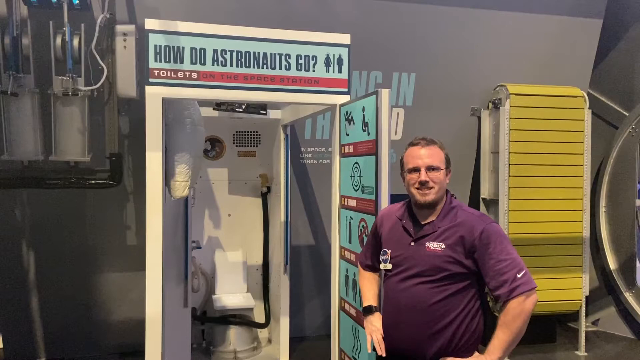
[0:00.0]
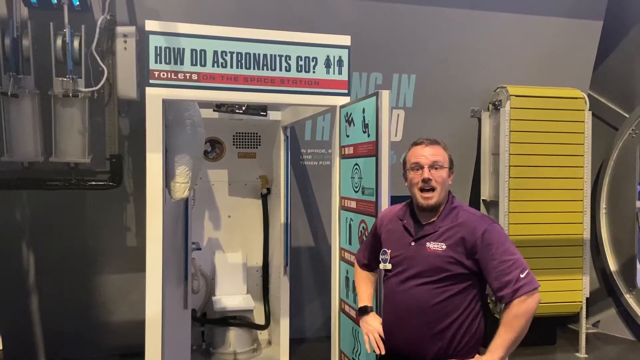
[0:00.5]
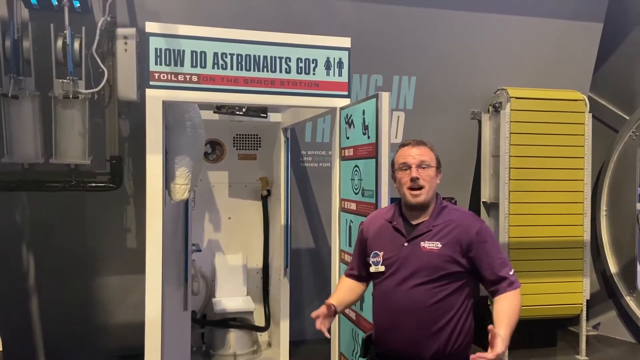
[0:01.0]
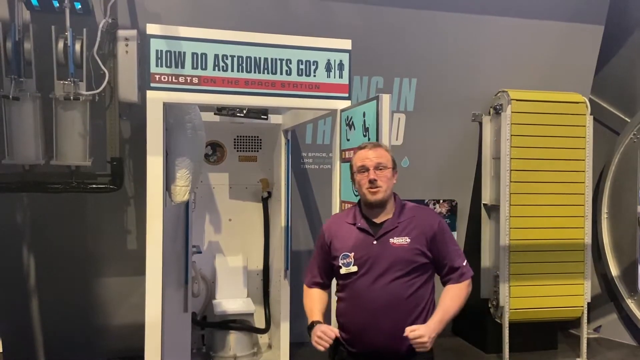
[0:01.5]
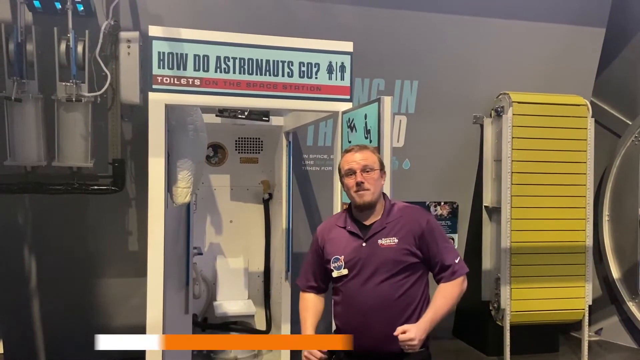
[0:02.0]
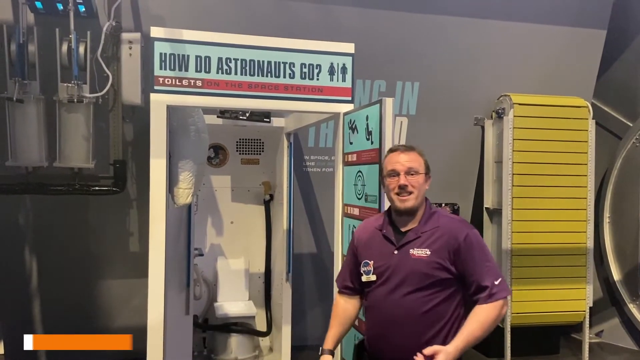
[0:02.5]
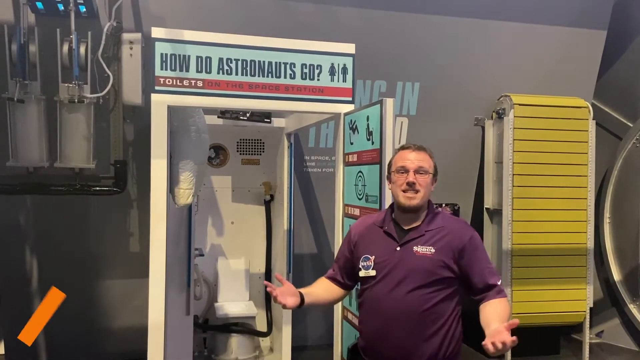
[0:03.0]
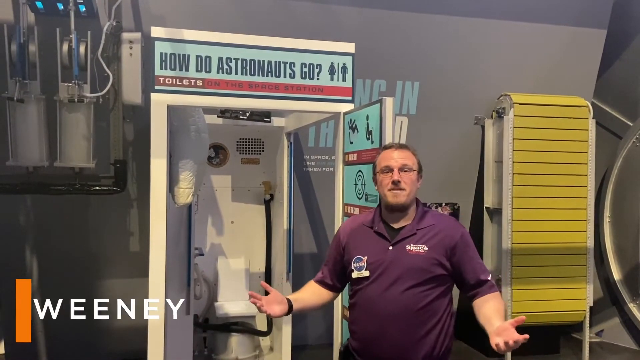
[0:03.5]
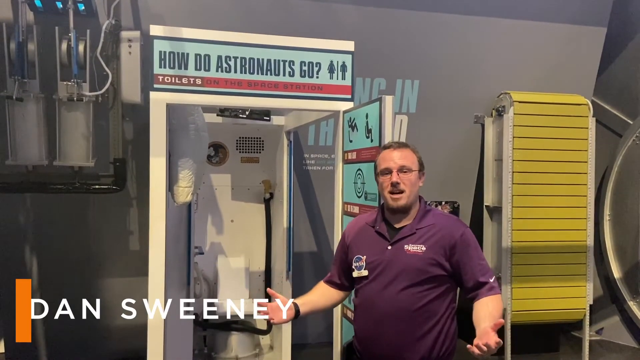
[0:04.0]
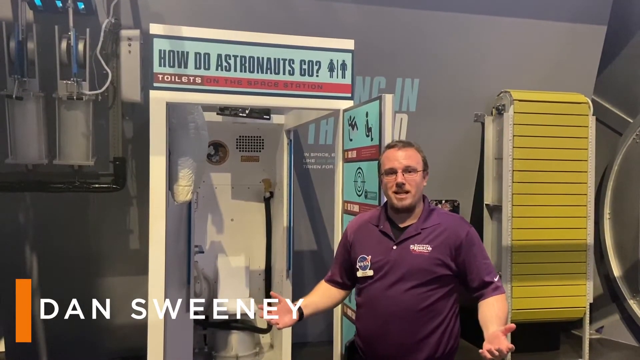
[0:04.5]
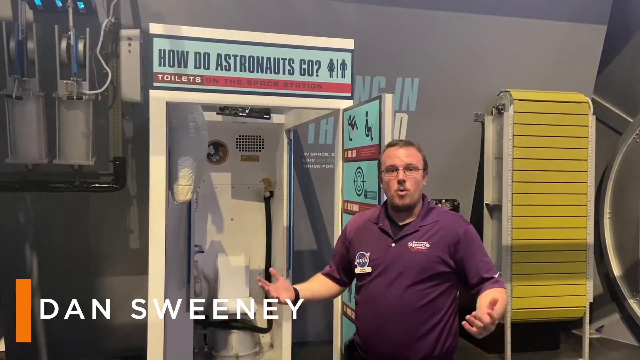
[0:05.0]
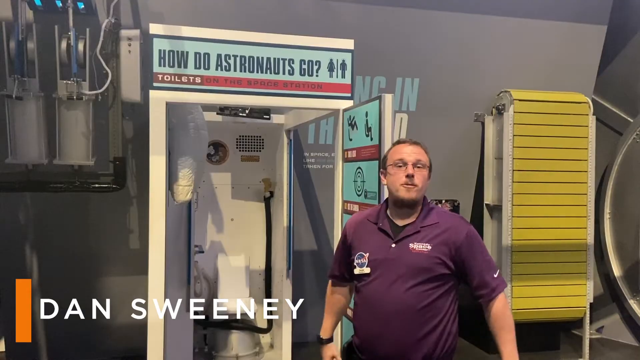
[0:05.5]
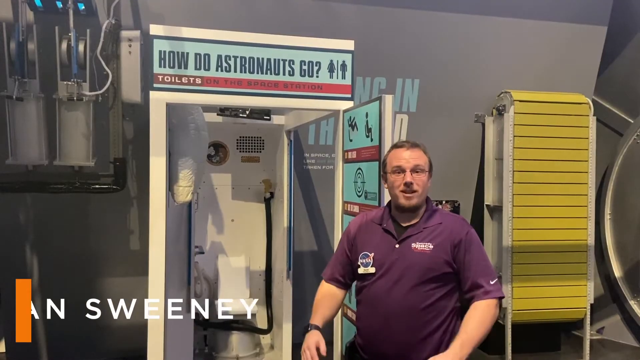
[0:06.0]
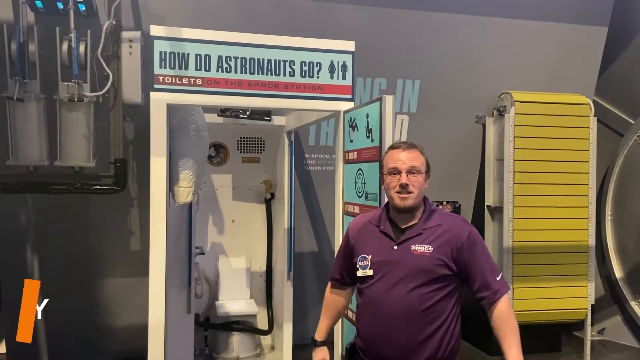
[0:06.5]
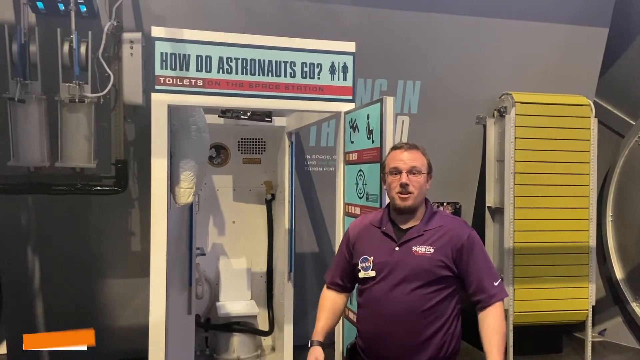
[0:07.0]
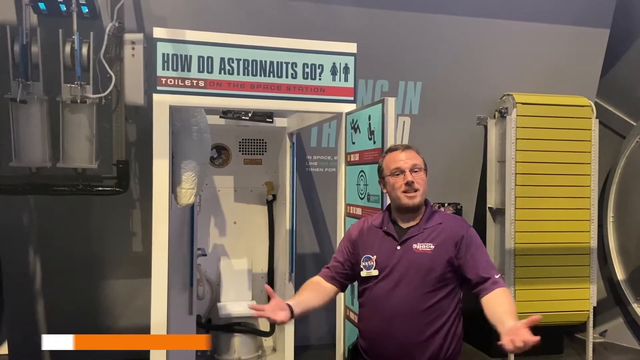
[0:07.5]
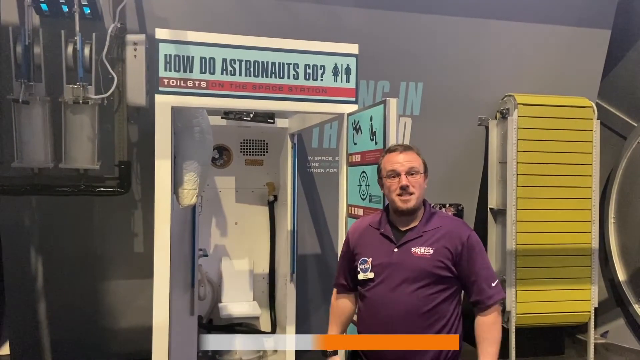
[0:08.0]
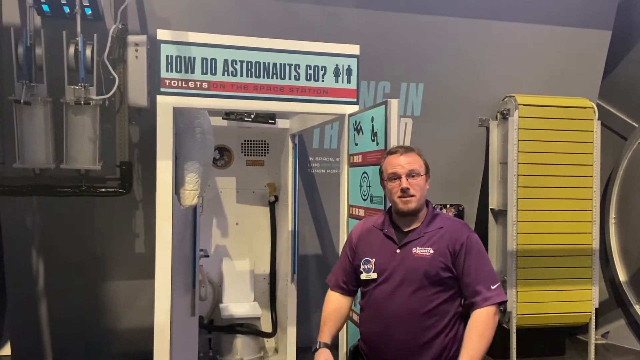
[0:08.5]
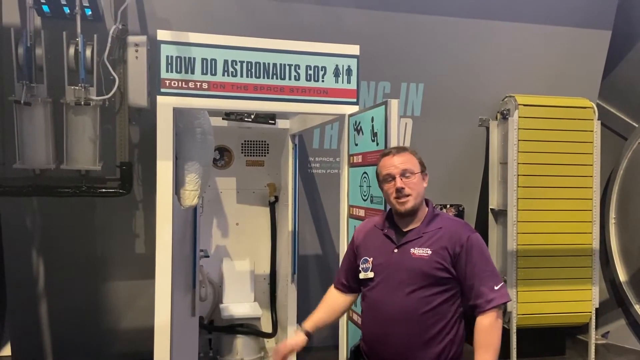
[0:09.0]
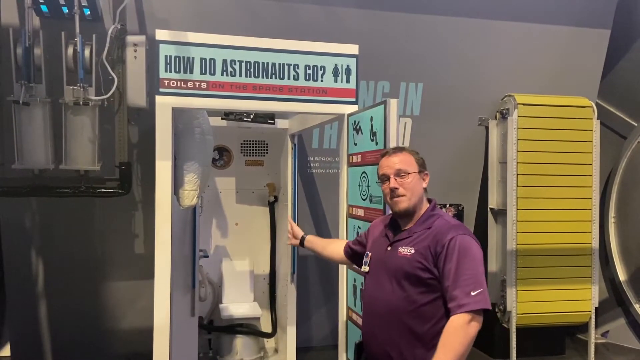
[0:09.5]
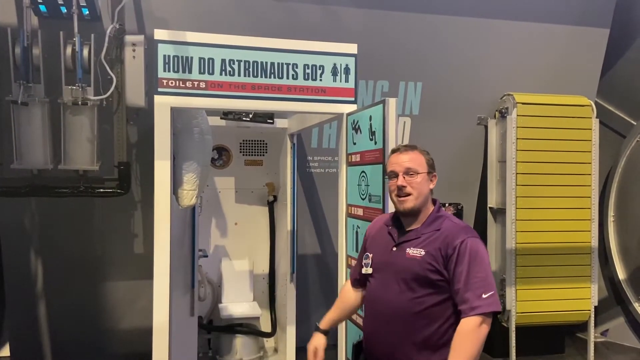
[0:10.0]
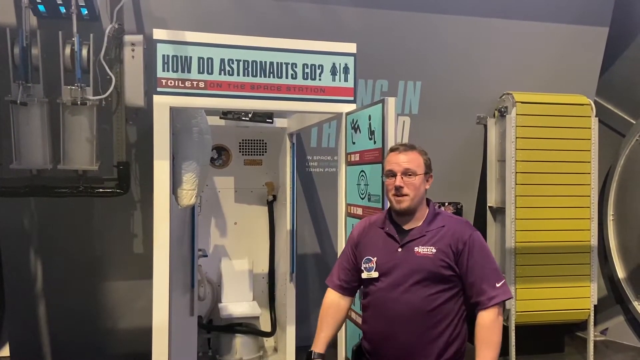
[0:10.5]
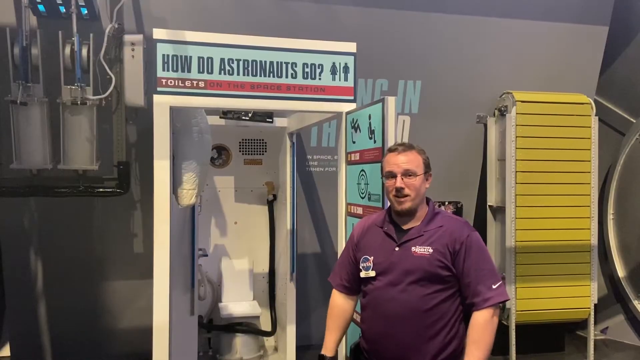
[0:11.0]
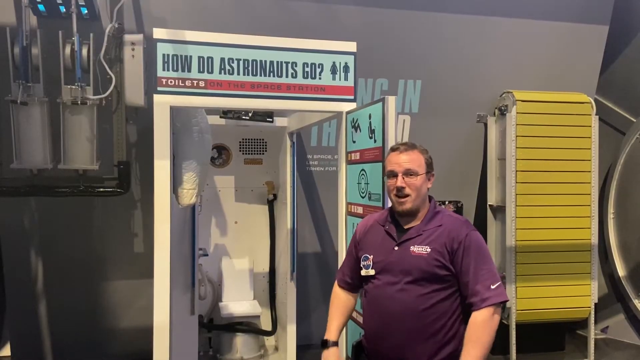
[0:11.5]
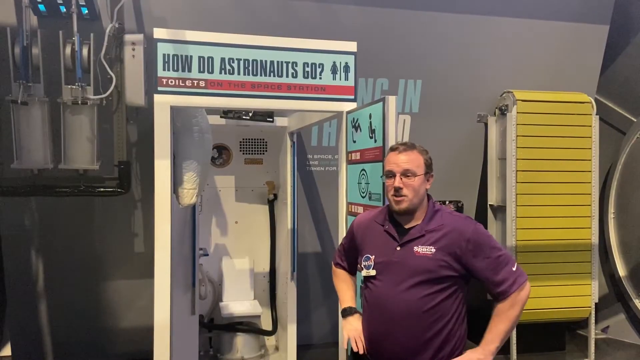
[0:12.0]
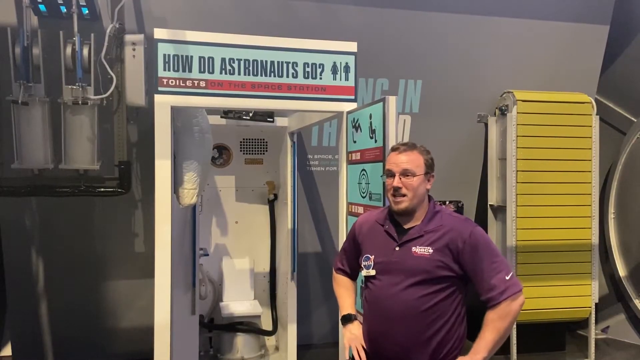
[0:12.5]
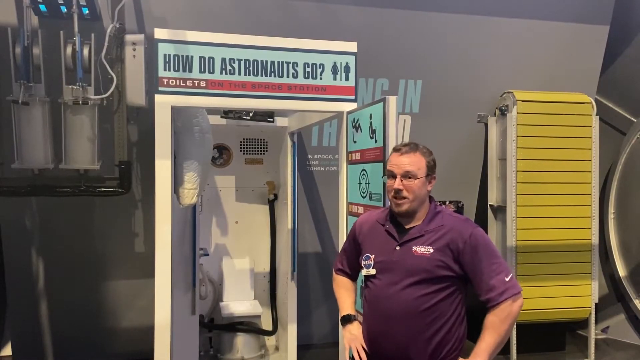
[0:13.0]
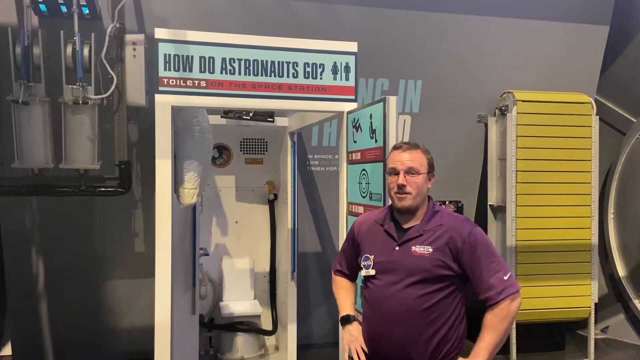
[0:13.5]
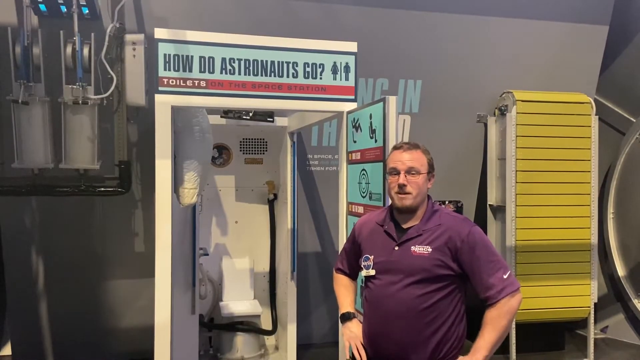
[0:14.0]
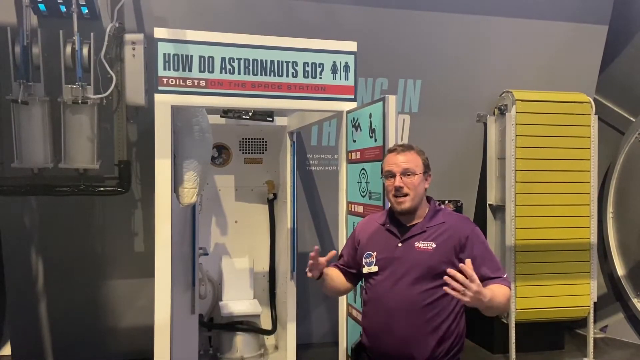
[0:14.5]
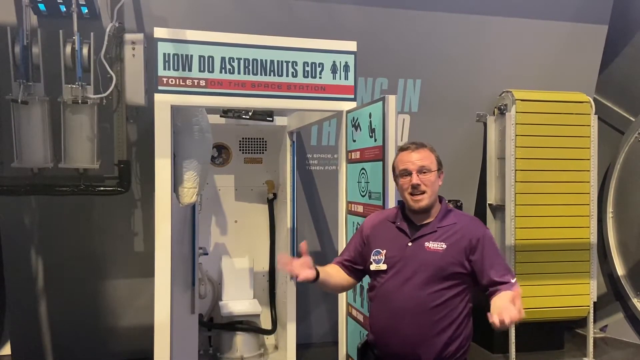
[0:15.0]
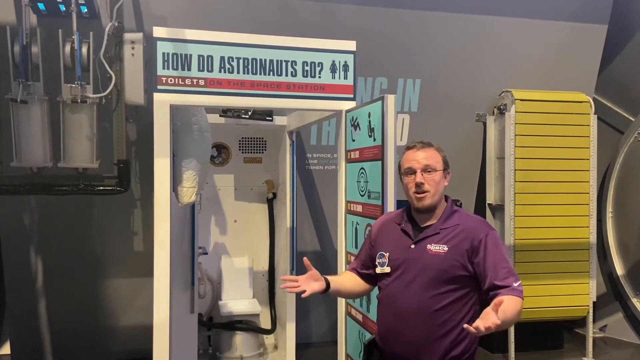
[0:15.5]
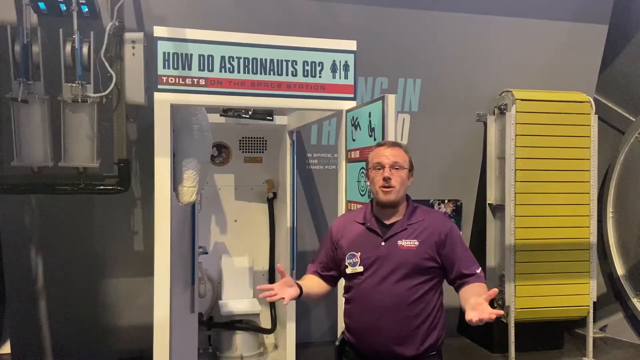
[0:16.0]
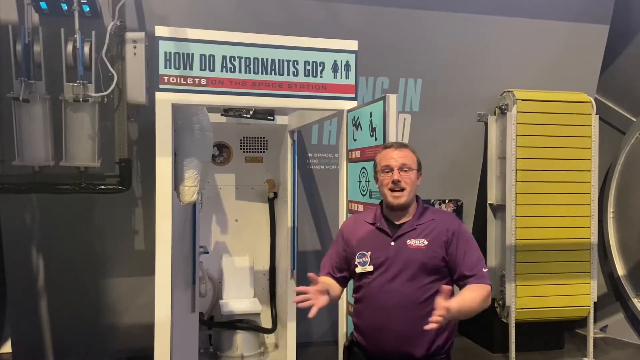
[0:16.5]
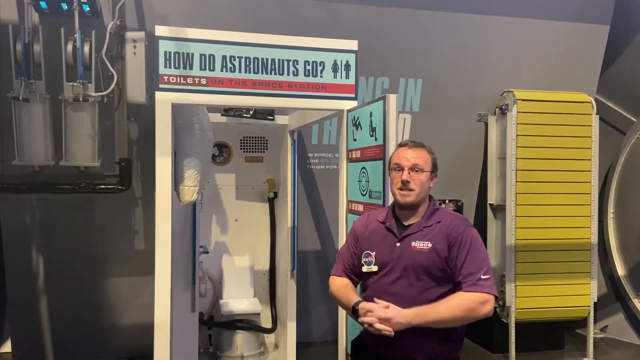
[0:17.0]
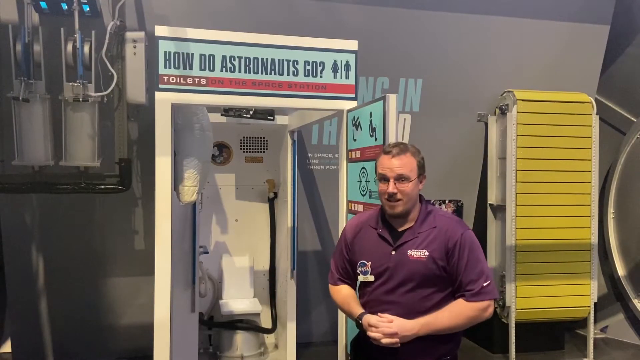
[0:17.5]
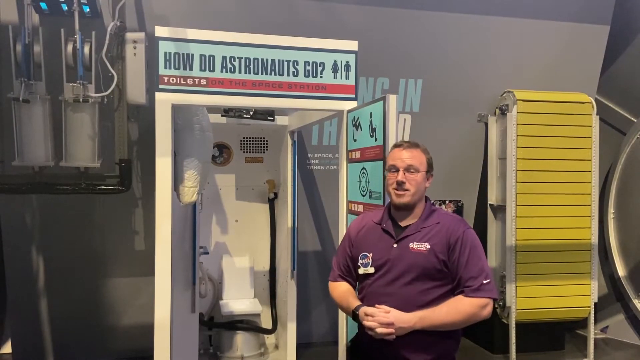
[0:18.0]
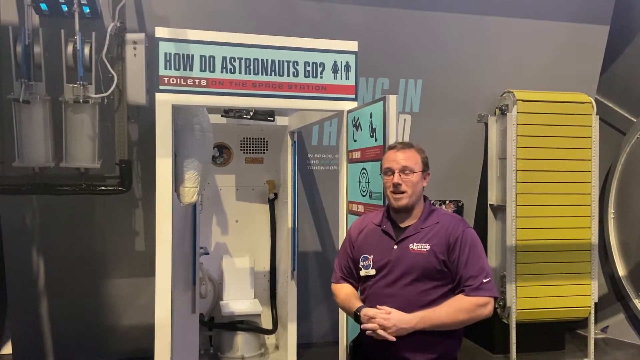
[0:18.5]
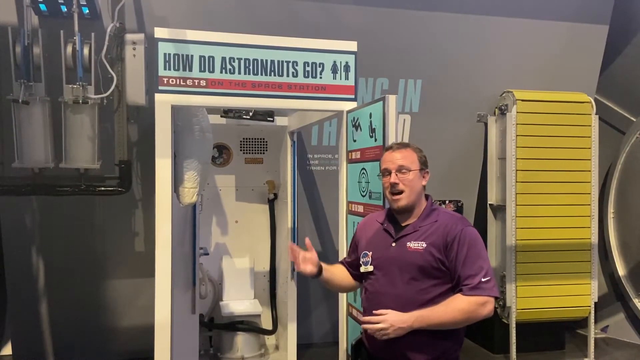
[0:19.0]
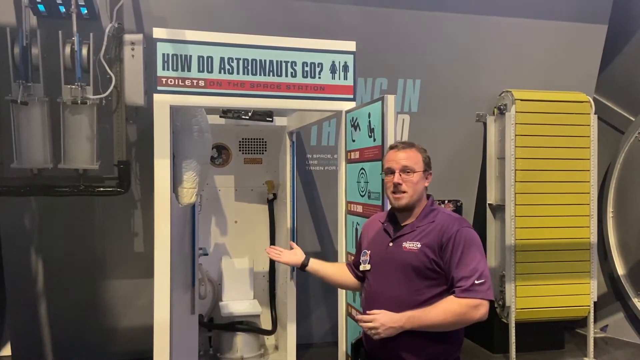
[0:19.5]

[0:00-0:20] A man in the bottom right of the frame looks at the viewer and speaks as if delivering a prepared presentation. Behind him is some sort of odd stall. At the top of the stall is the text "how do astronauts go" followed by a picture of a woman and a man side by side, indicating a restroom. At the very bottom, in small white text, it says "toilets." On the right side of the door that opens into the toilet are step-by-step instructions on how to go when in a rocket ship.